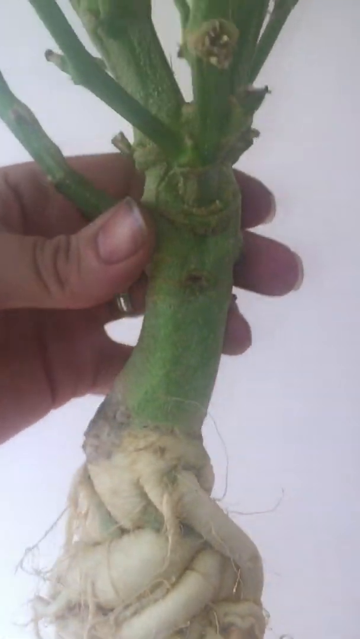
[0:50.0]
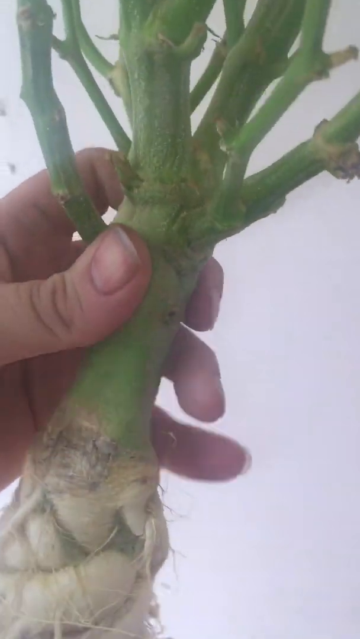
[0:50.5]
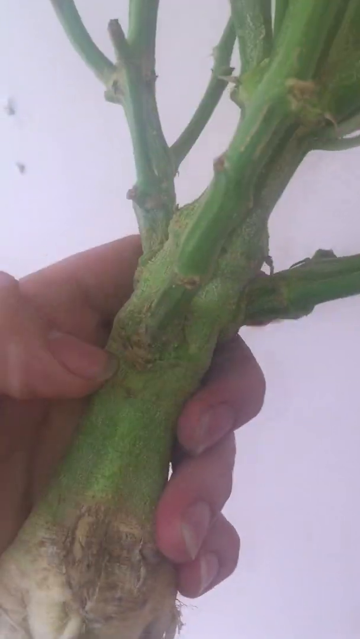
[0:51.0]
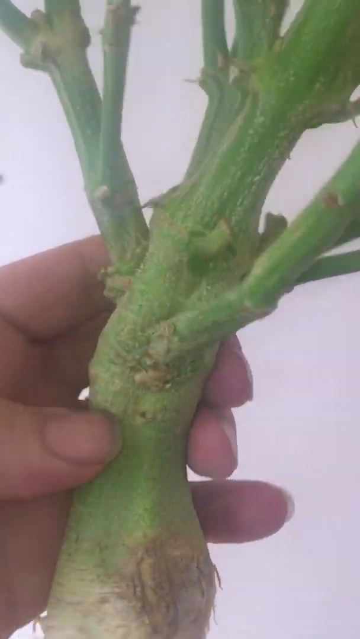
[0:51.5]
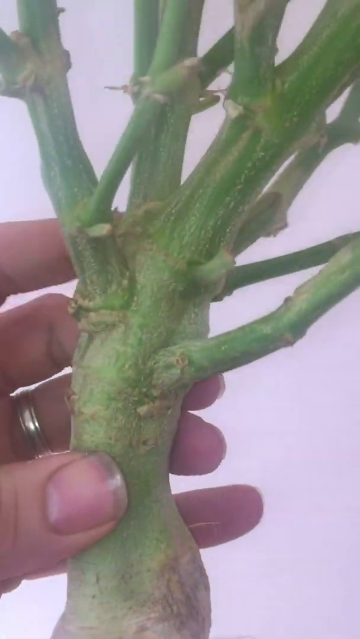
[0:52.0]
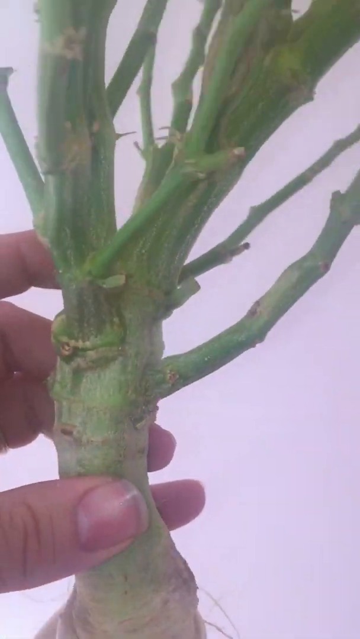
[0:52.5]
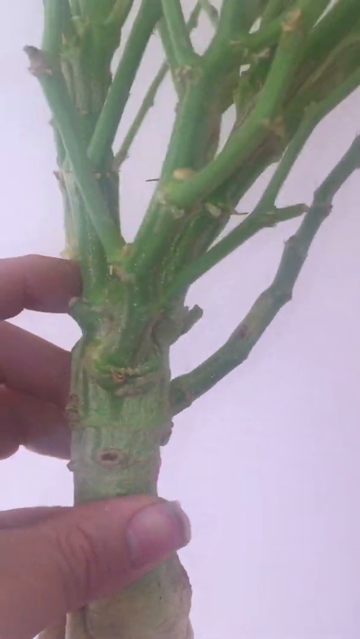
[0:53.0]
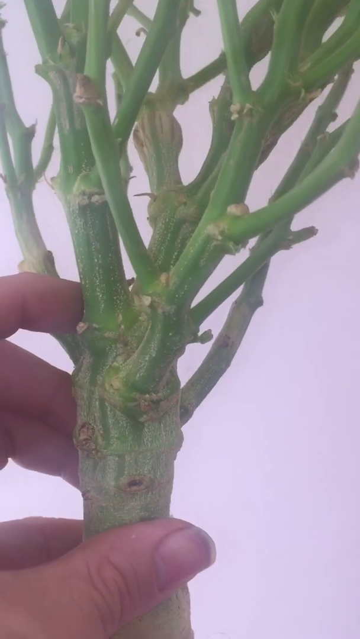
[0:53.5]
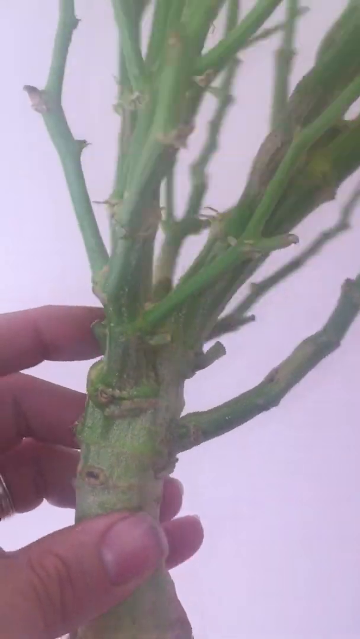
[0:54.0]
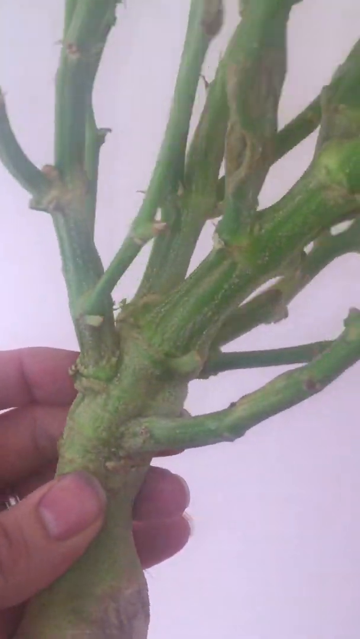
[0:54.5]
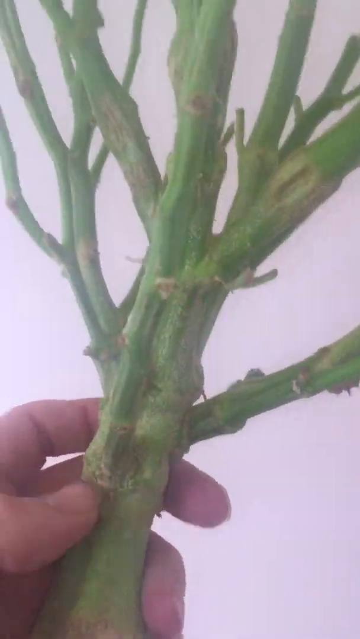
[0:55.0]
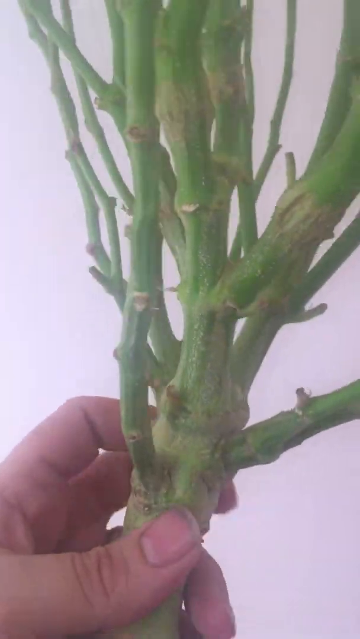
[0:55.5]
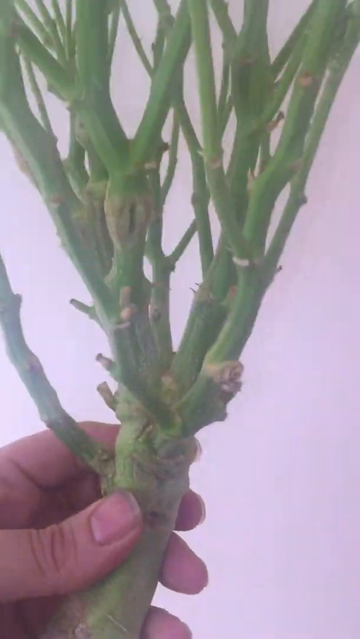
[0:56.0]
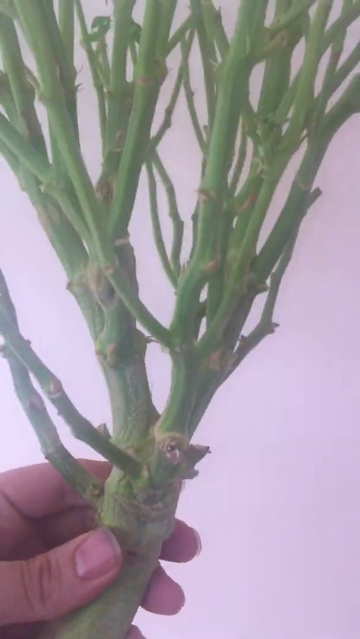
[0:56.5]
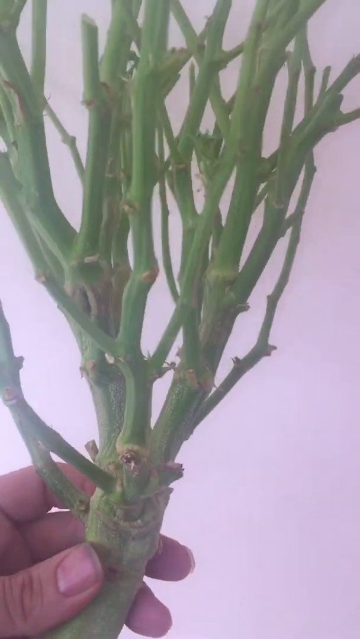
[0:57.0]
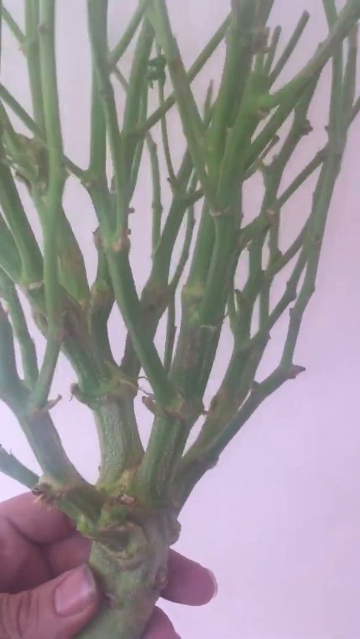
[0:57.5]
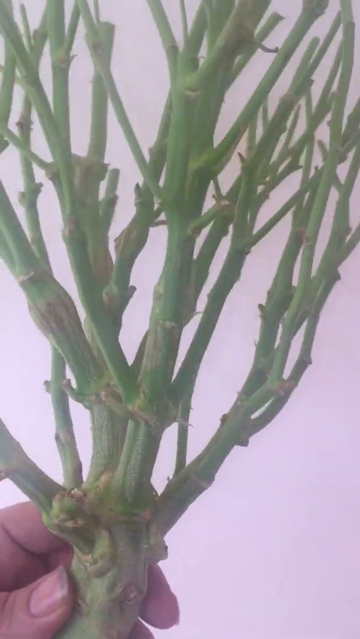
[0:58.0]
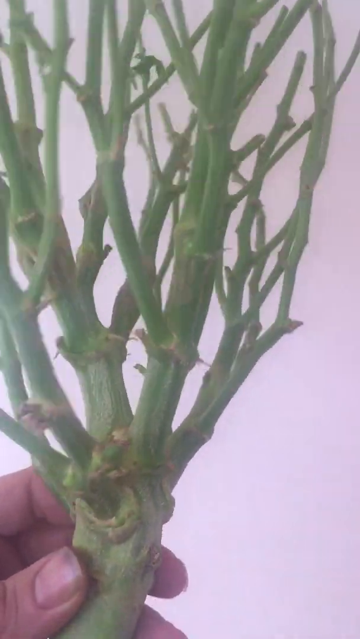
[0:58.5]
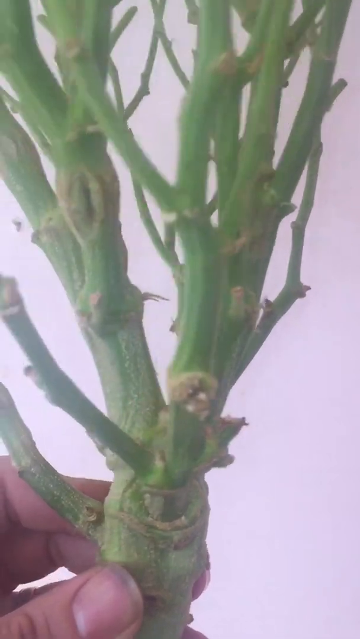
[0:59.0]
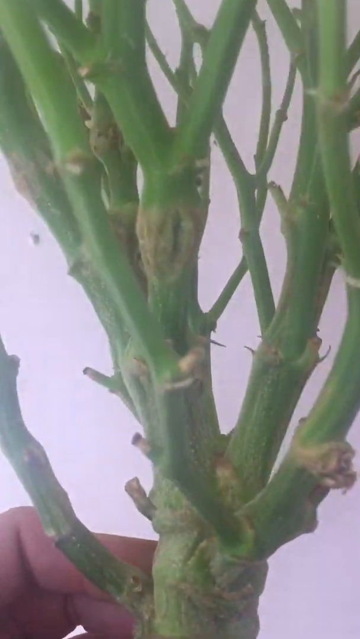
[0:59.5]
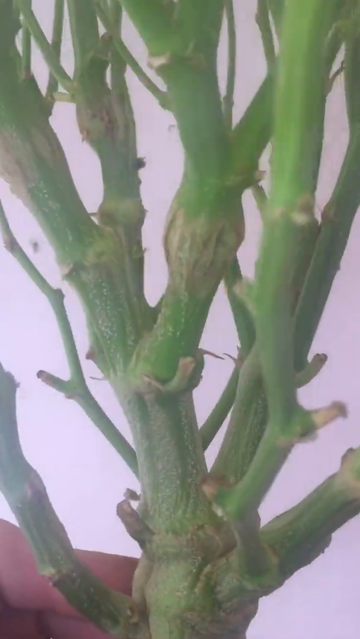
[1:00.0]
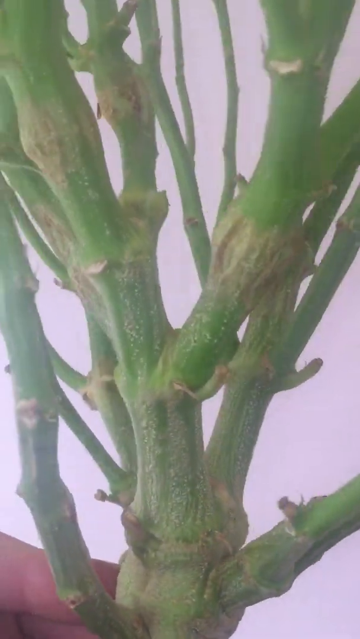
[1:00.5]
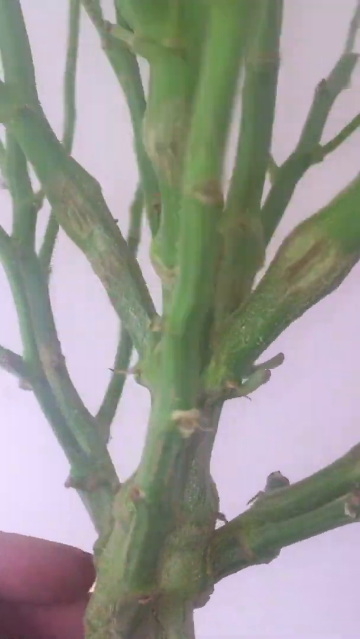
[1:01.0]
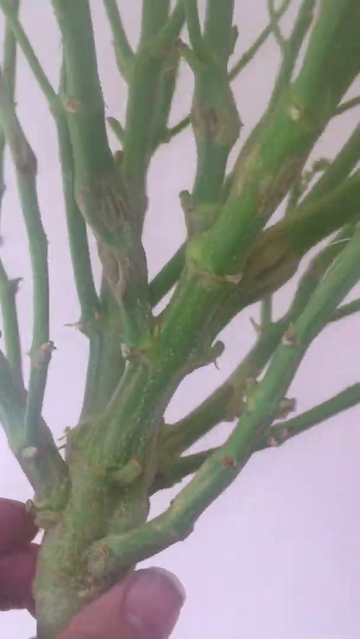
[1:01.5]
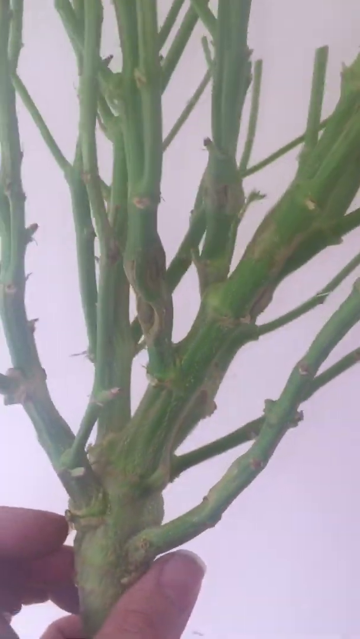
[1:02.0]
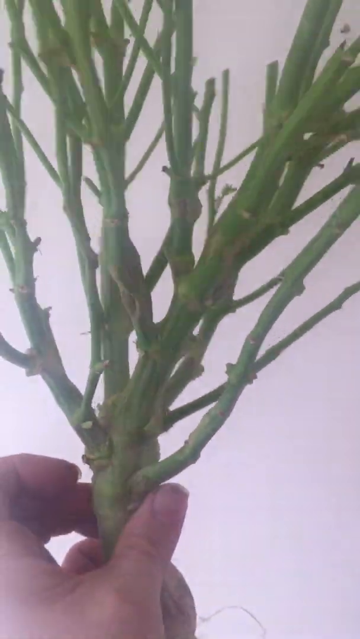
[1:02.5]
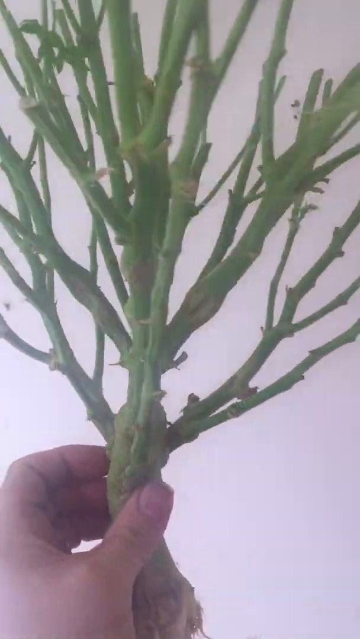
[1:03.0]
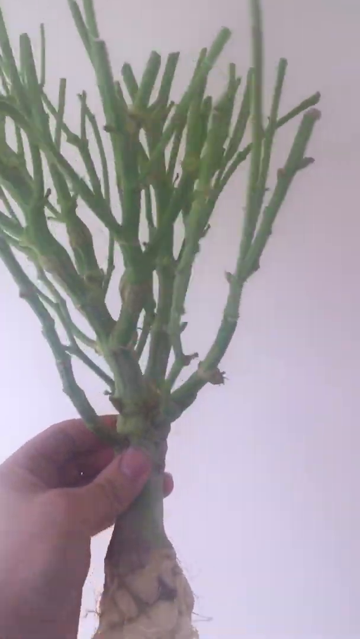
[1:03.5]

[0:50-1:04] The upper branches, which look like more than 10, are shown as the person twists the plant. The camera zooms in while the person keeps twisting the branch. The background is gray. The camera is very close as it zooms in, and the picture quality is not good: it is a bit blurry and looks like mist. The hand of the person holding the plant is visible, with short nails and a ring on the other side.